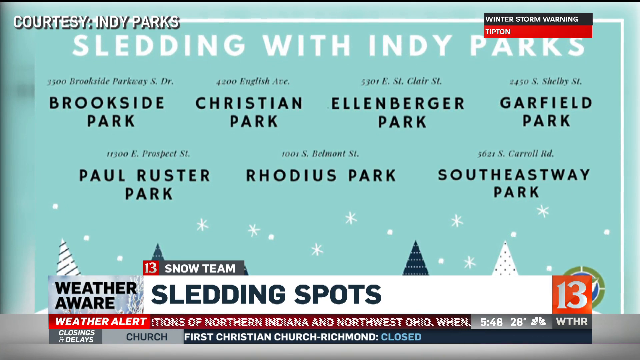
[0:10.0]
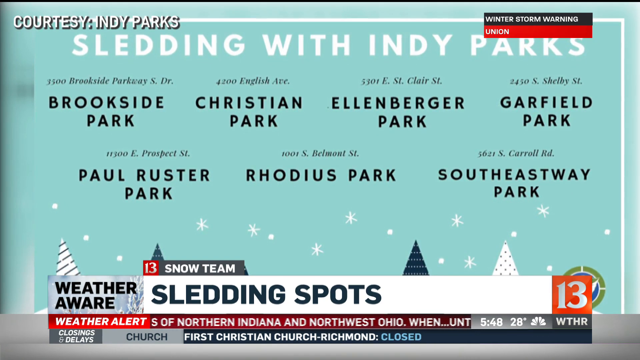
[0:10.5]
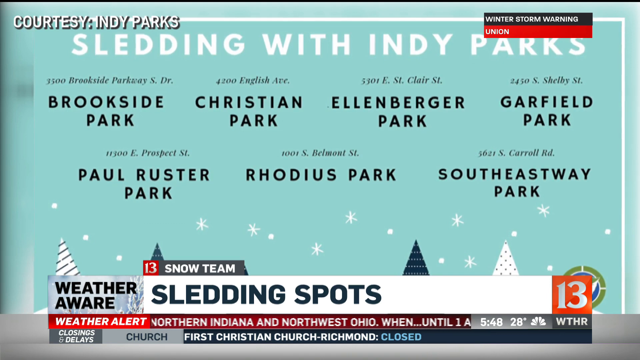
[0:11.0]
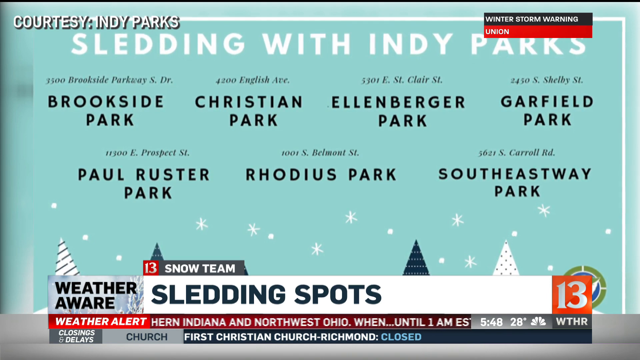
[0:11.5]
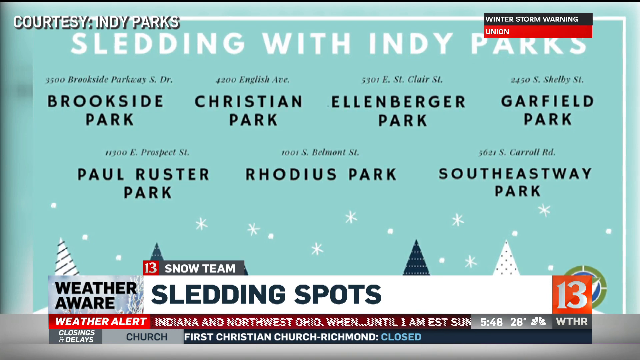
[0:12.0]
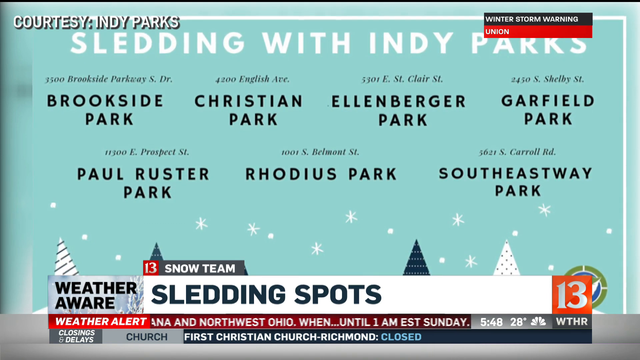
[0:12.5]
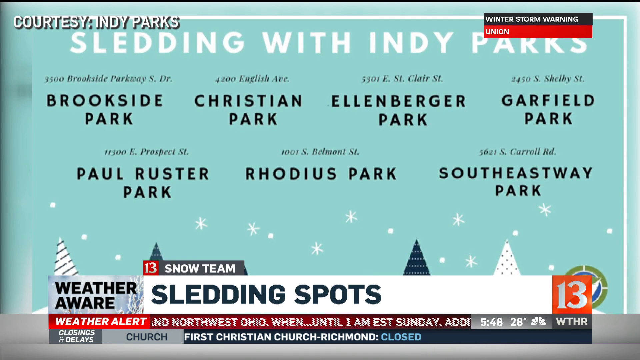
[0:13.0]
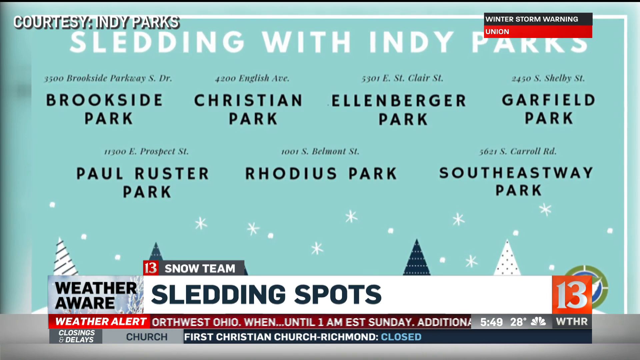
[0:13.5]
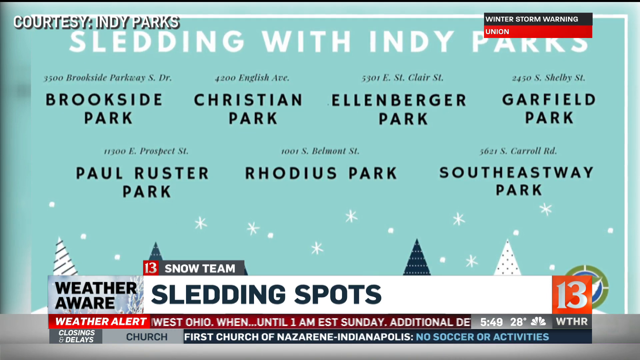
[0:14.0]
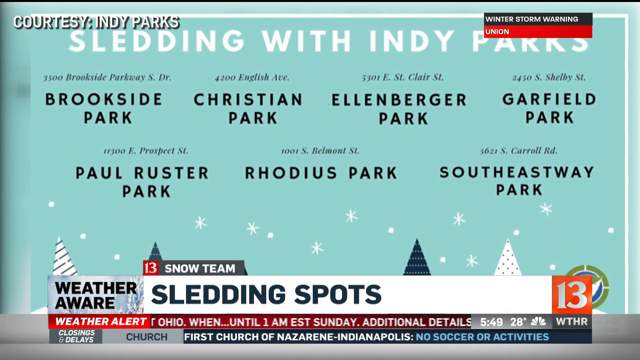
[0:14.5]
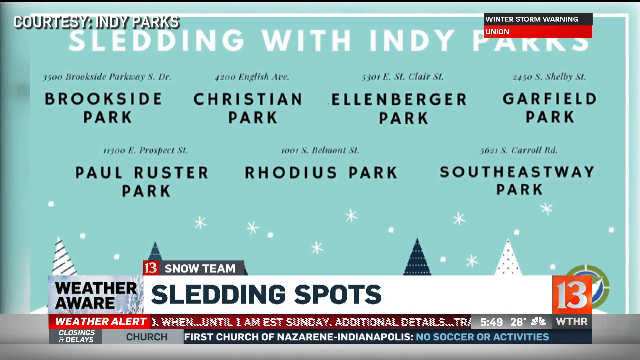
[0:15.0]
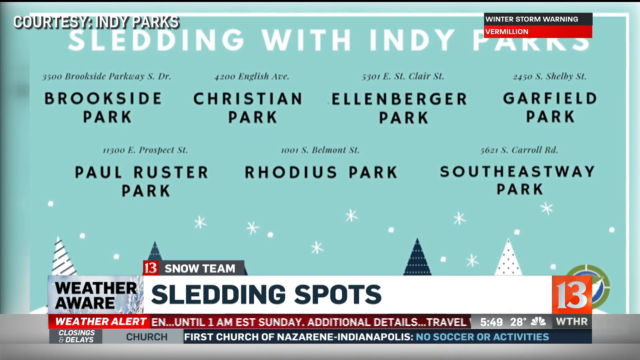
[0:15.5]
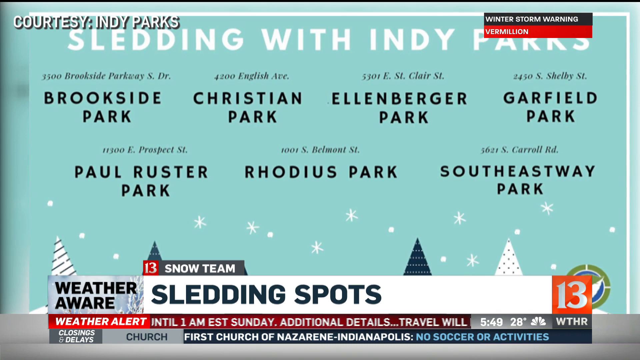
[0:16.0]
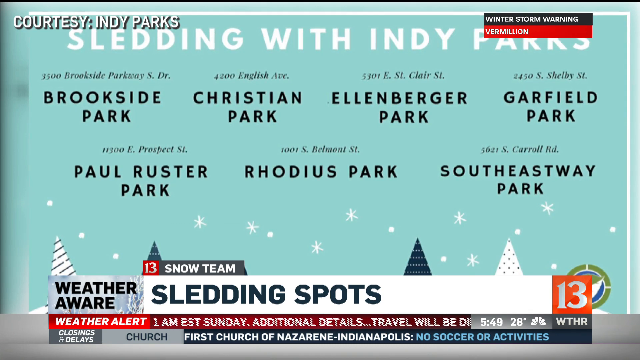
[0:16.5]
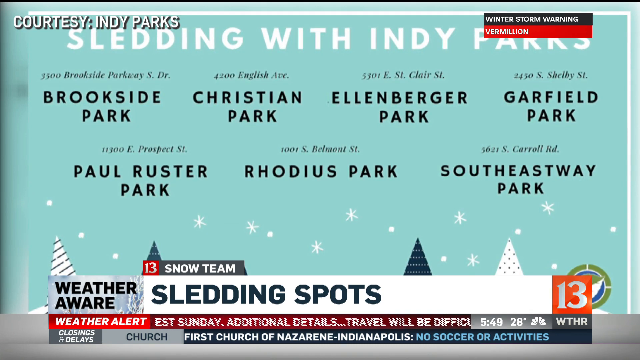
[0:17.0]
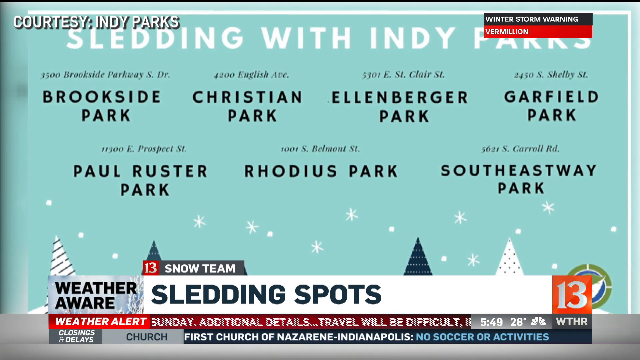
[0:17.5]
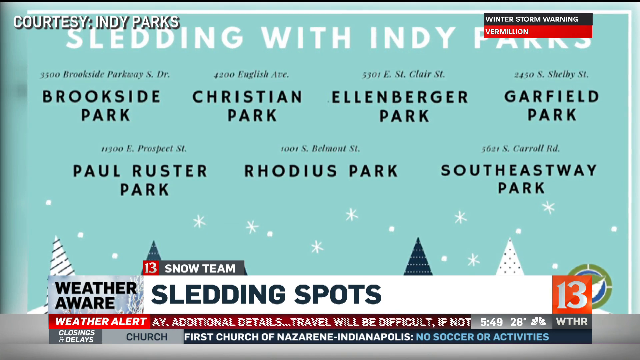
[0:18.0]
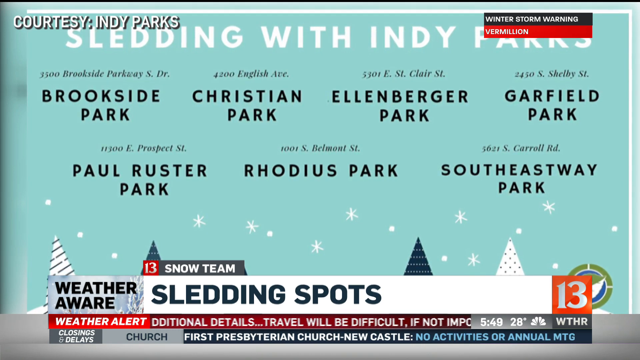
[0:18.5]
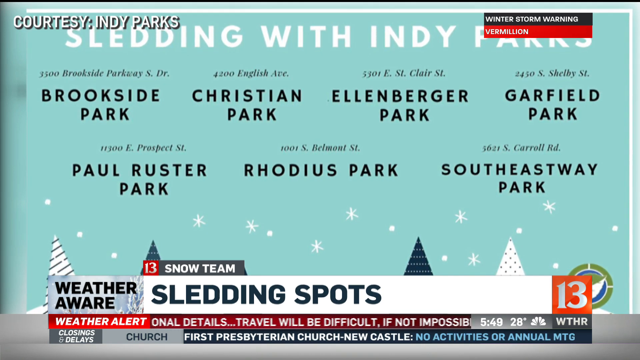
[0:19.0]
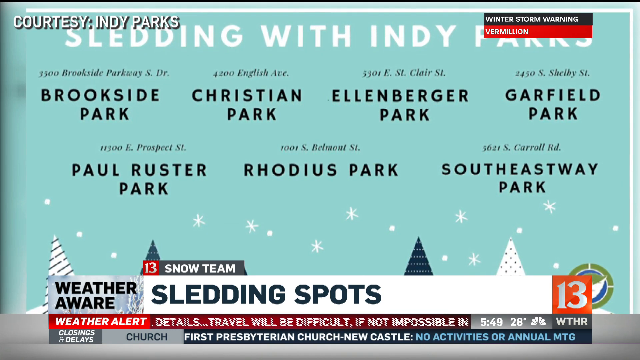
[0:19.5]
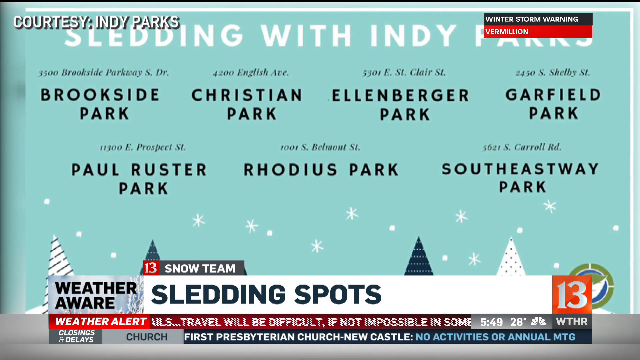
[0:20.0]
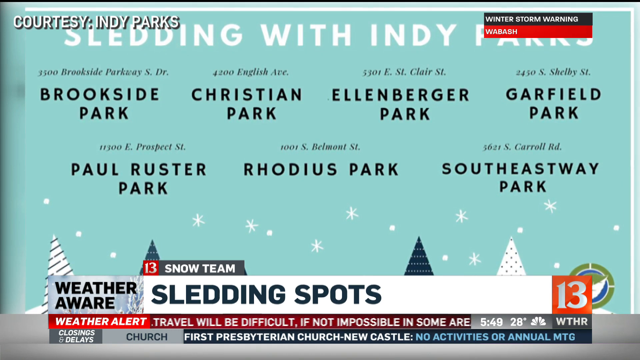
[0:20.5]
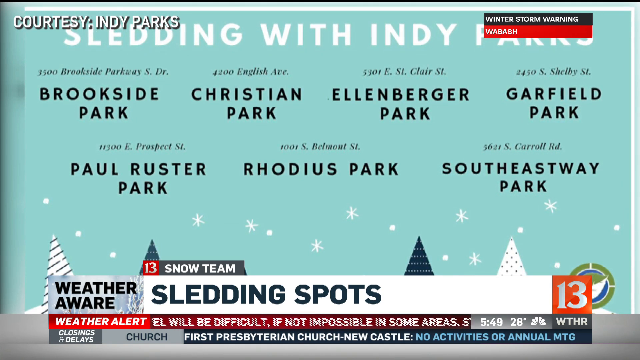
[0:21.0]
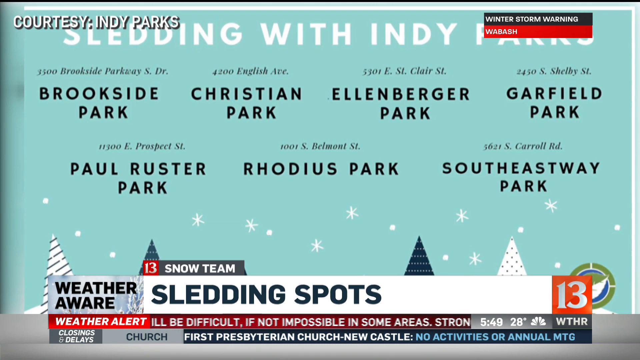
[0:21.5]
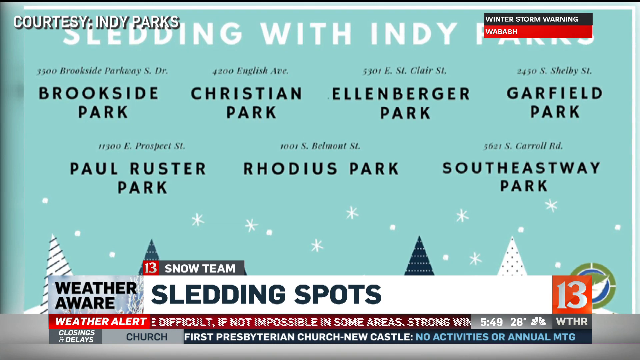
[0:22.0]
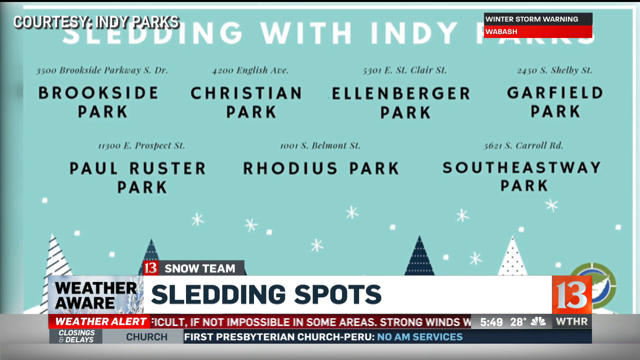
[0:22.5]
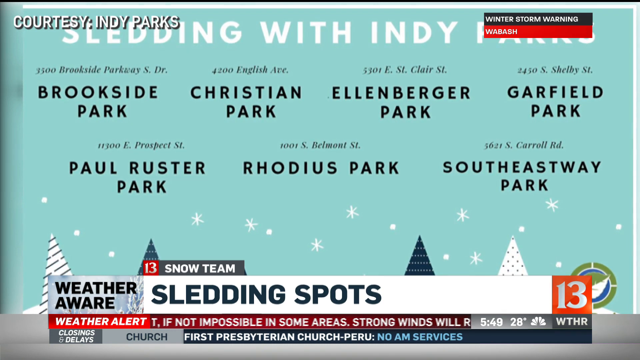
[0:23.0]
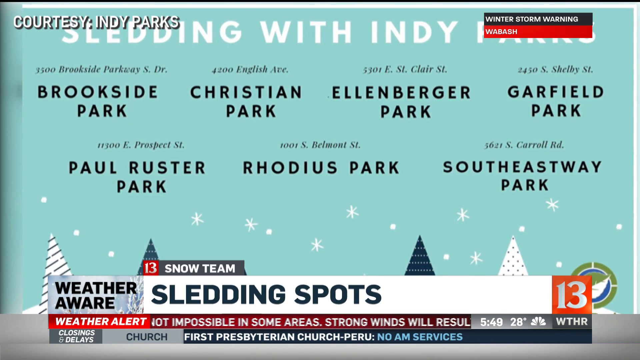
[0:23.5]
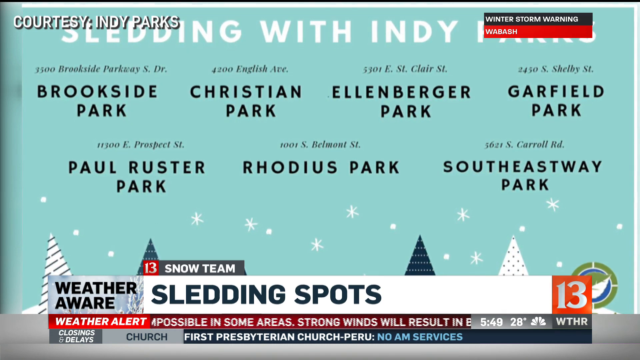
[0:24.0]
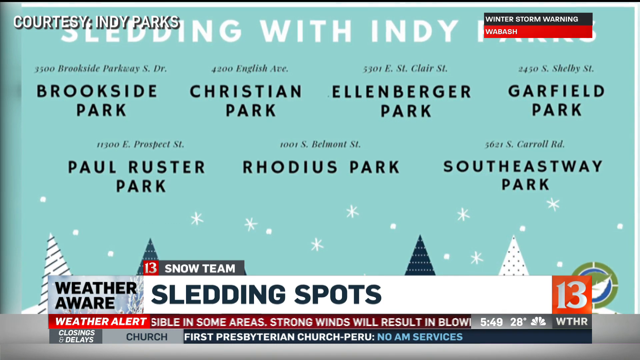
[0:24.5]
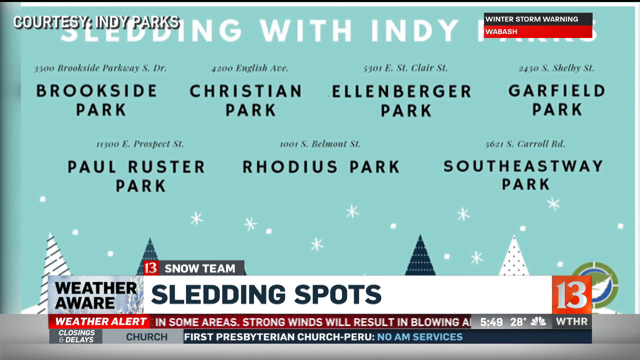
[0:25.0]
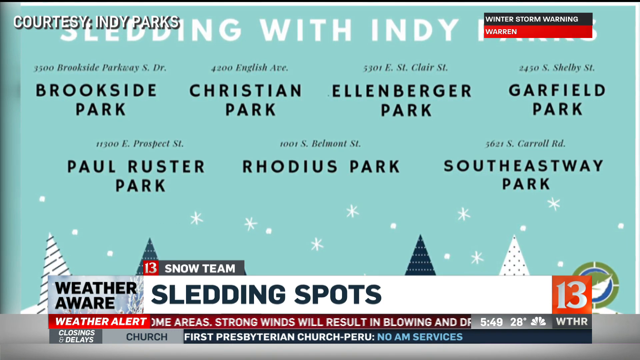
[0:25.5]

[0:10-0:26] The broadcast is WTHR channel 13, with the time shown as 5:49 and the temperature at 28 degrees. A weather alert mentions strong winds. The newscaster presents where people can go sledding, and the parks are listed: Brookside Park on Brookside Parkway, Christian Park on English Ave, Ellenberger Park on East St. Clair Street, Garfield Park on S. Shelby Street, Paul Ruster Park on East Prospect Street, Rodius Park on South Belmont Street, and Southeastway Park on South Carroll Road. A winter storm warning in the top corner lists places that need to watch out, including Tipton and Union, with the warning in effect until 1 a.m. Eastern Standard Time on Sunday.